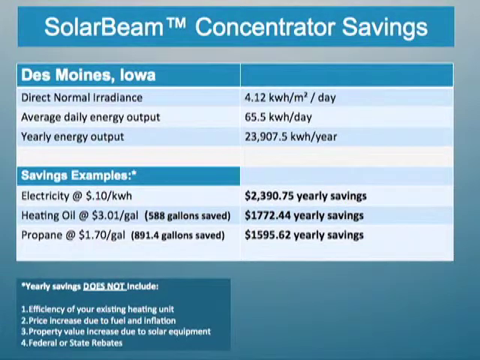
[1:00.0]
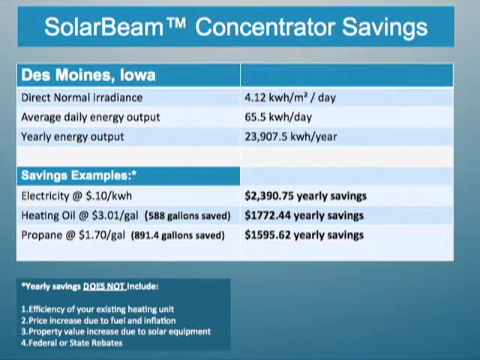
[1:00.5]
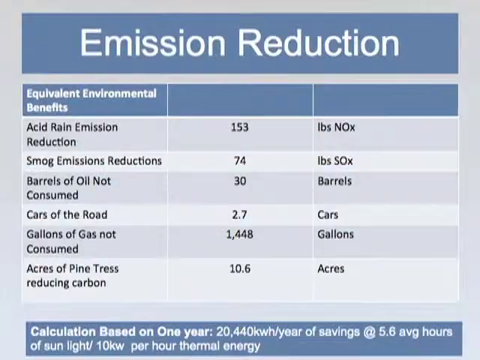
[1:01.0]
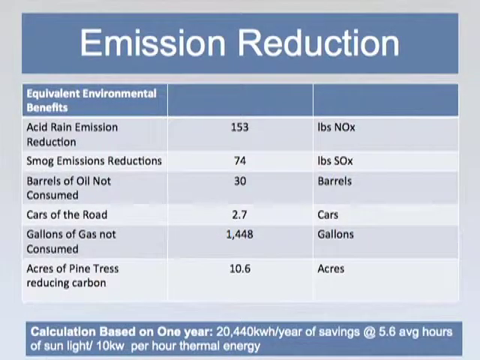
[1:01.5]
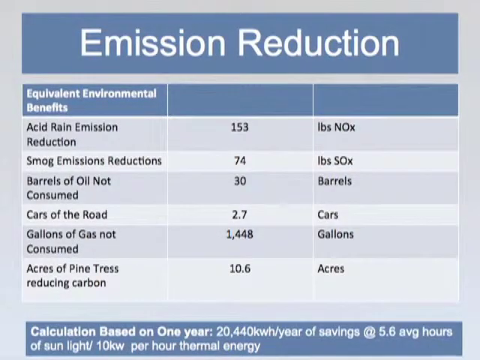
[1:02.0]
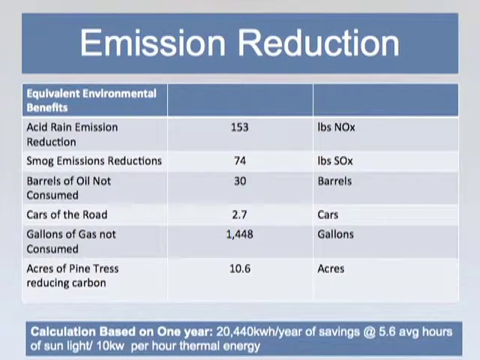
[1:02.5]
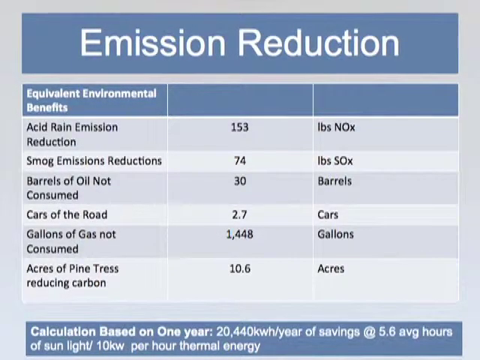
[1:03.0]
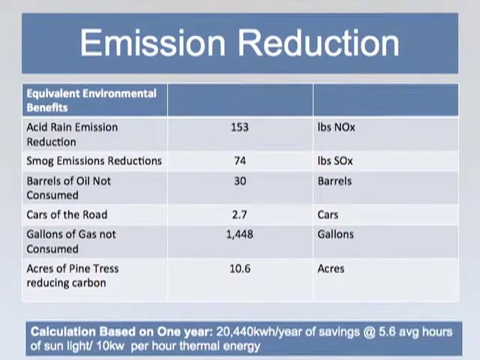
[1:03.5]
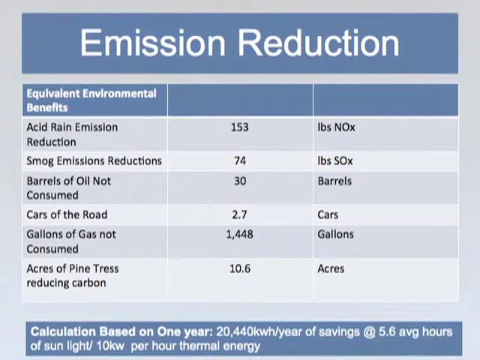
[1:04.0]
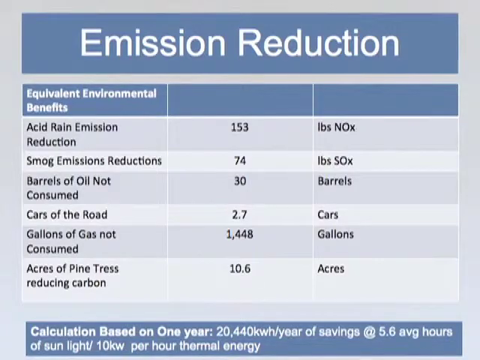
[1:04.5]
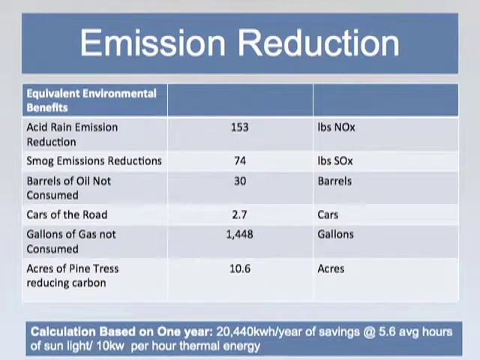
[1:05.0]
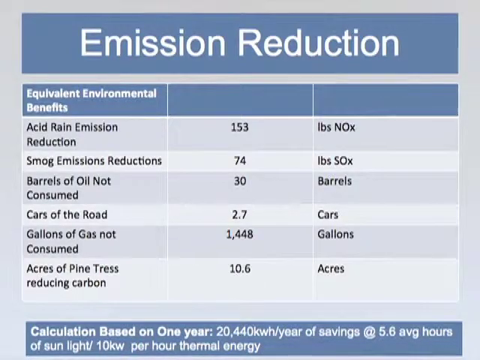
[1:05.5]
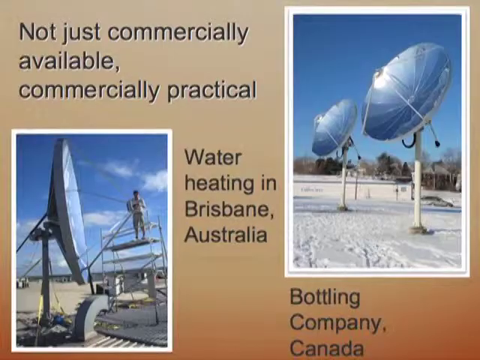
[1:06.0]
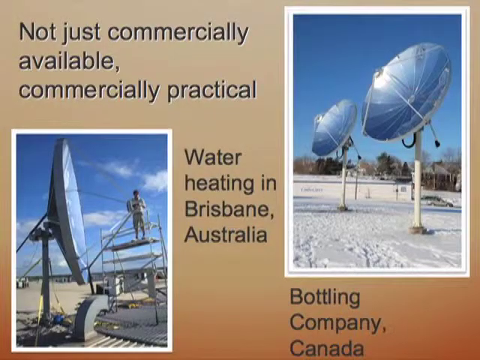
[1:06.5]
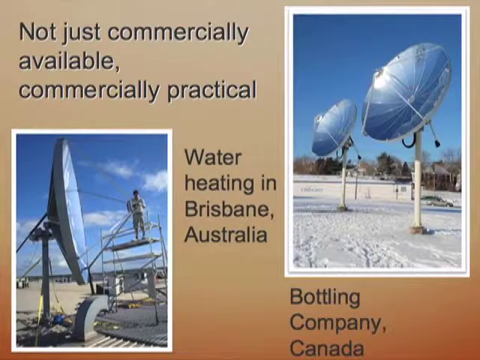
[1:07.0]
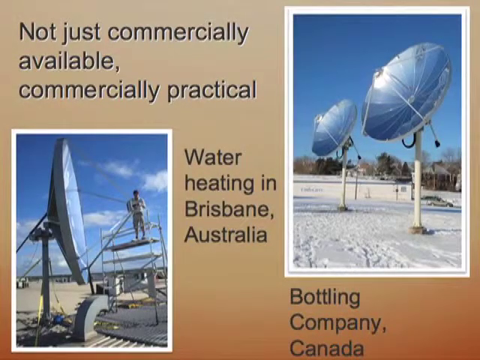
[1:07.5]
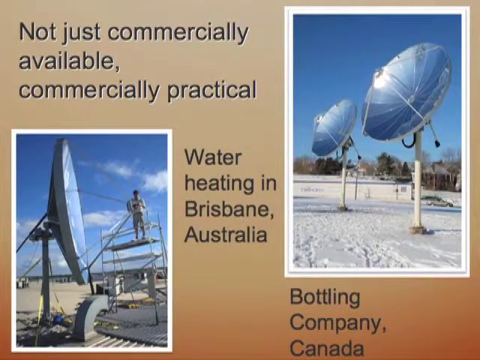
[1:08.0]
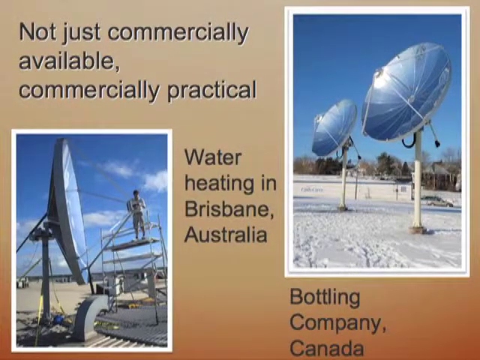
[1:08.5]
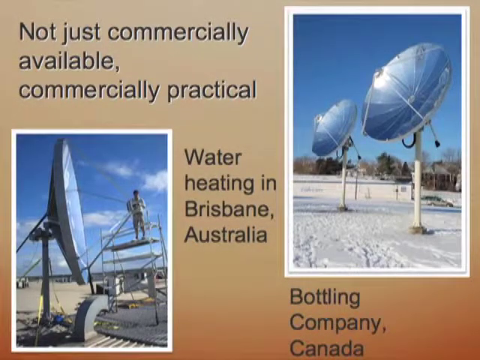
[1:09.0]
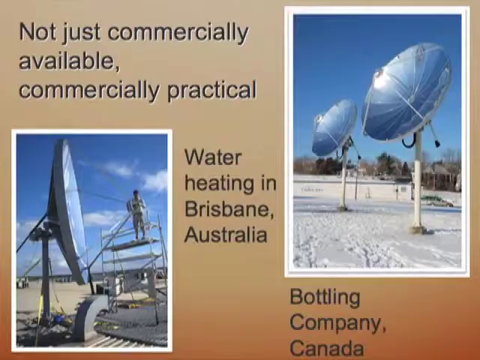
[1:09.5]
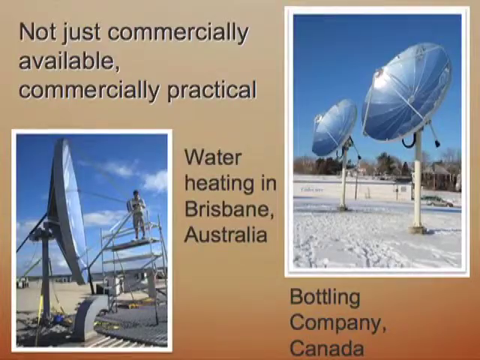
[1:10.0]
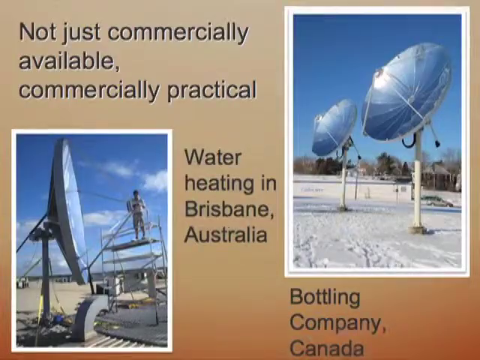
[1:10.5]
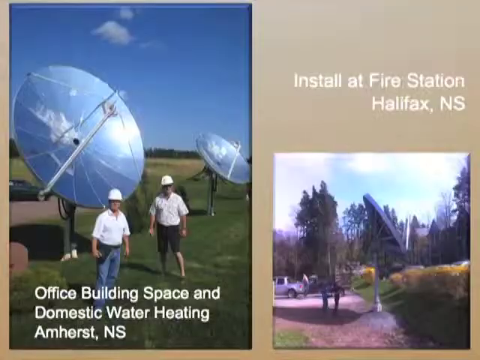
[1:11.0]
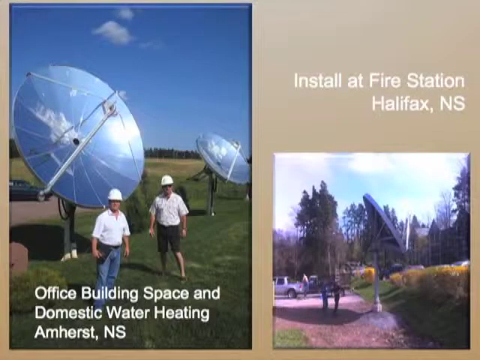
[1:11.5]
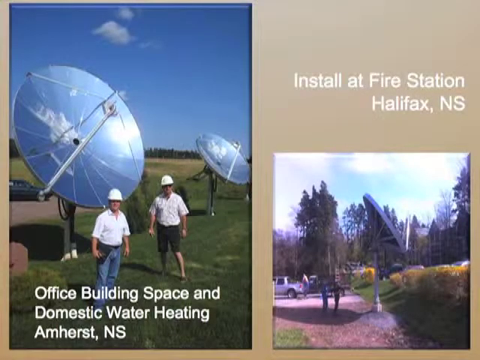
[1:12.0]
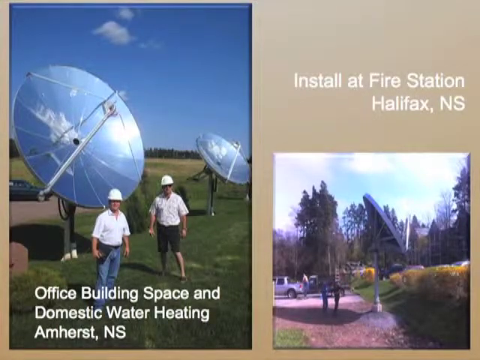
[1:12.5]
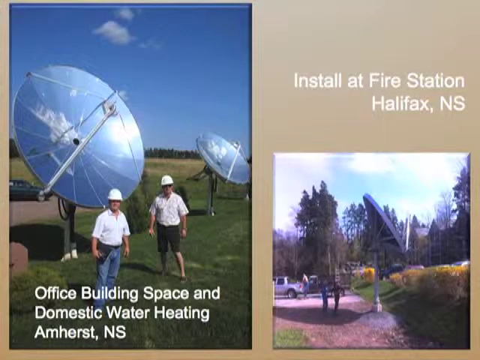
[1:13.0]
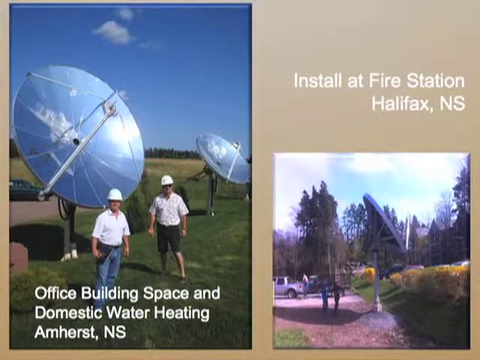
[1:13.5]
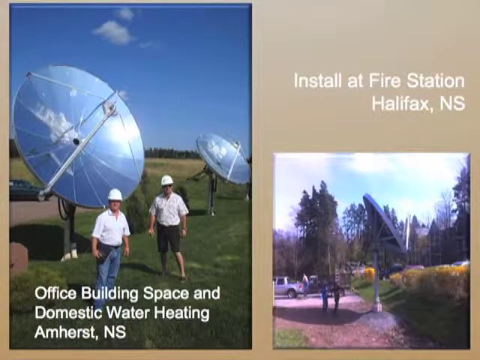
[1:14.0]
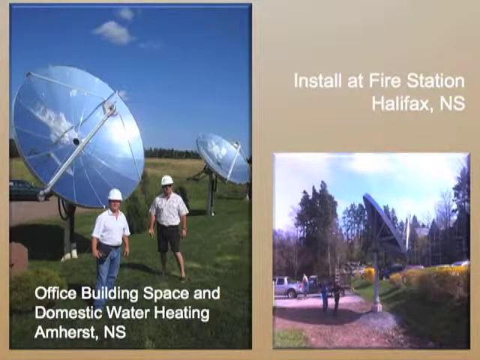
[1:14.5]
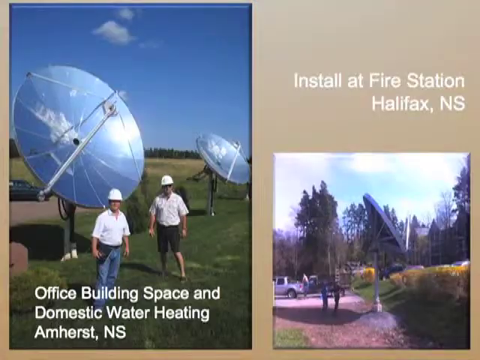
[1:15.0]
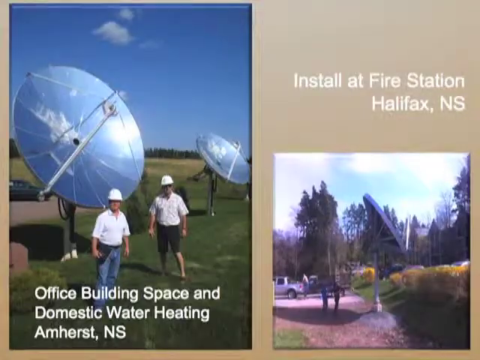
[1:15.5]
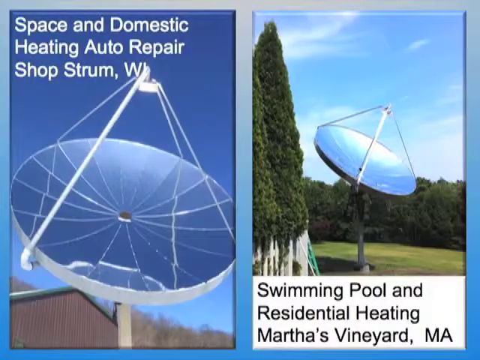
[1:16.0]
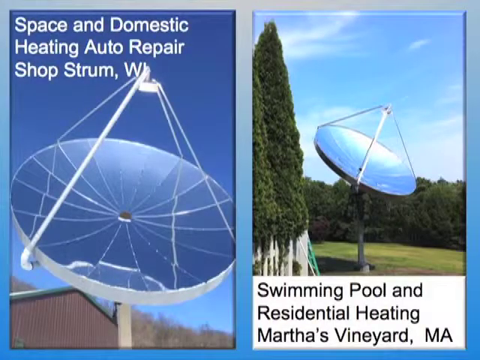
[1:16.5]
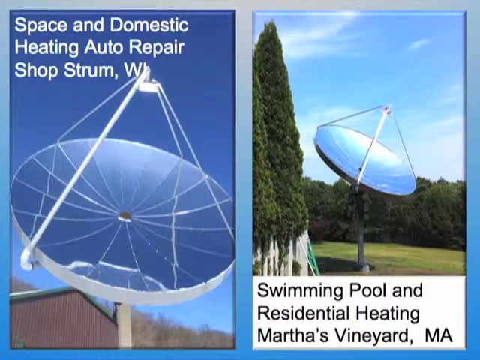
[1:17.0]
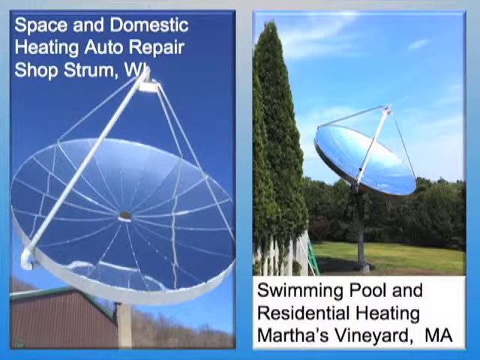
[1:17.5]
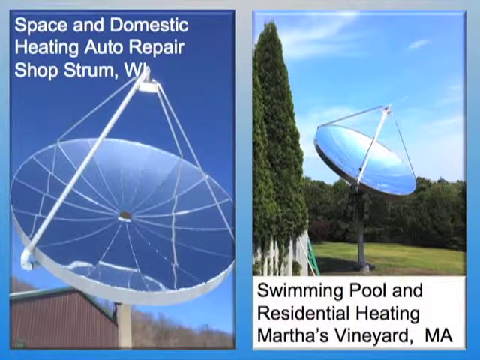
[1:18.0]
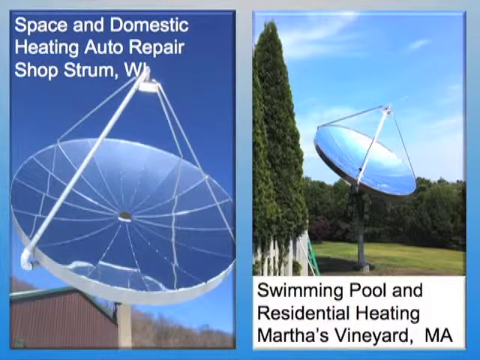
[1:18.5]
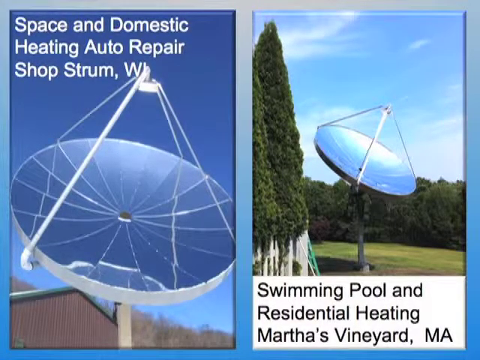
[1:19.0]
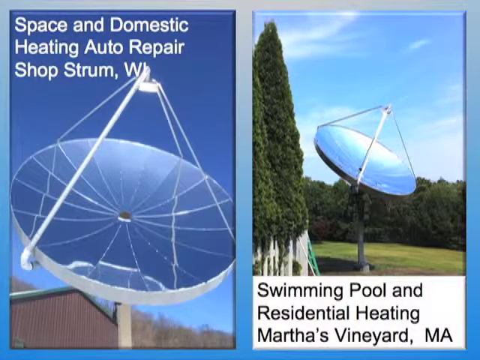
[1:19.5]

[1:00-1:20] The concentrating savings screen is shown very briefly. Next is a gray and white chart about emission reduction, listing equivalent environmental benefits such as acid rain emission reduction, smog emissions, barrels of oil not consumed, gallons of gas not consumed and pine trees, with numbers next to them and the type of emission in another column. Then come pictures of more satellite dishes. On the left is a large dish with a man on a very wide ladder, who looks like he is working on it. The other picture shows two dishes, apparently seen earlier, a medium-sized one and a large one, both out in the snow, with an SUV, a couple of houses and trees. Between them are the words "not just commercially available, commercially practical" and "water heating in Brisbane, Australia," on a beige background. More pictures follow: a satellite dish with two men outside, both wearing white hard hats, standing near the dish and holding on. Another picture shows a dish with text saying it is installed at a fire station in Halifax, apparently Nova Scotia; trees, bushes, a parking lot and a couple of cars are visible, and there appear to be two people far away in the image. Another image shows more satellite dishes: the one on the left says "space and domestic heating, auto repair," while the other is in the middle of what looks like some type of field with trees around it and says "residential heating, Martha's Vineyard."